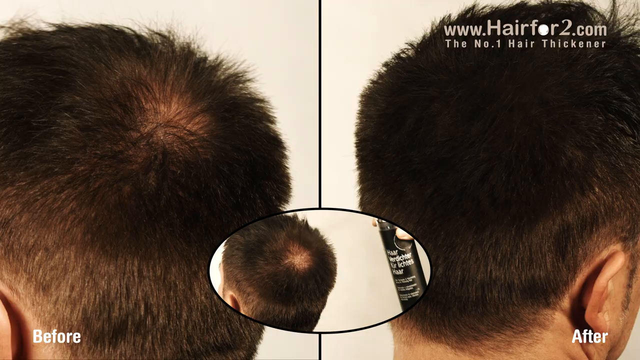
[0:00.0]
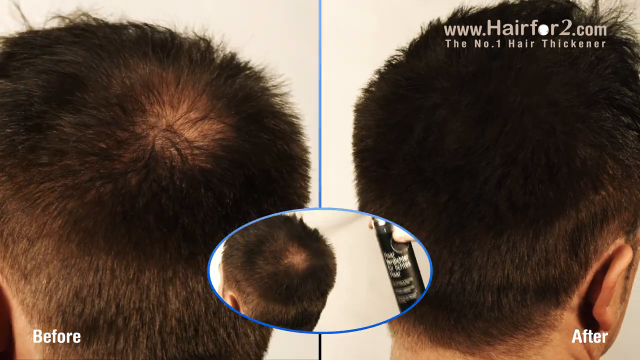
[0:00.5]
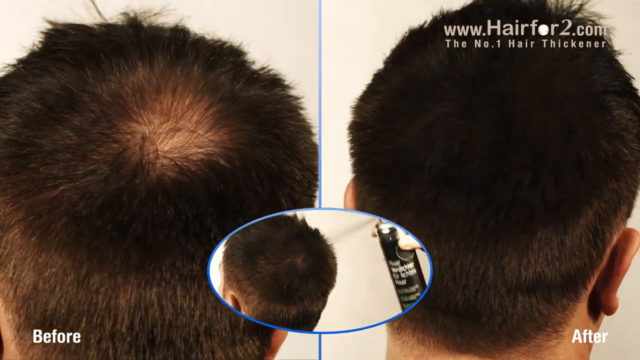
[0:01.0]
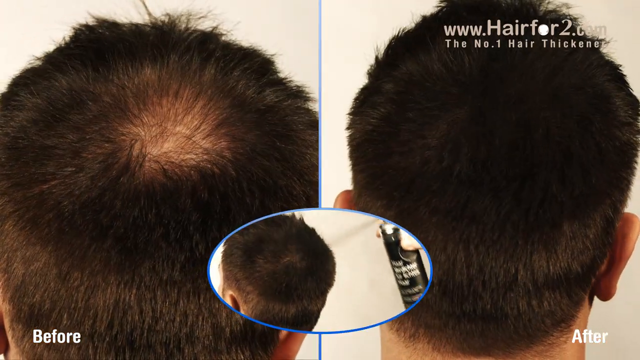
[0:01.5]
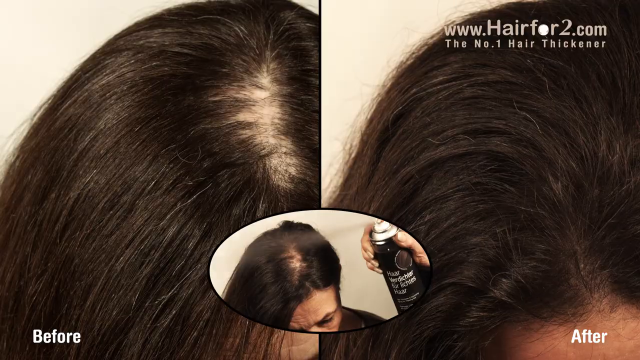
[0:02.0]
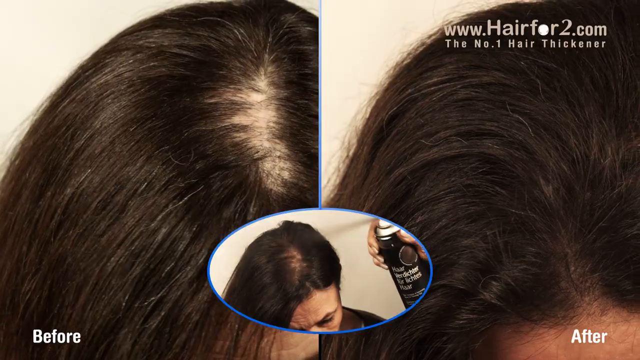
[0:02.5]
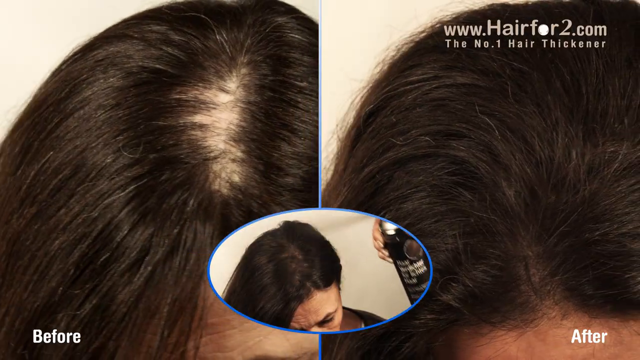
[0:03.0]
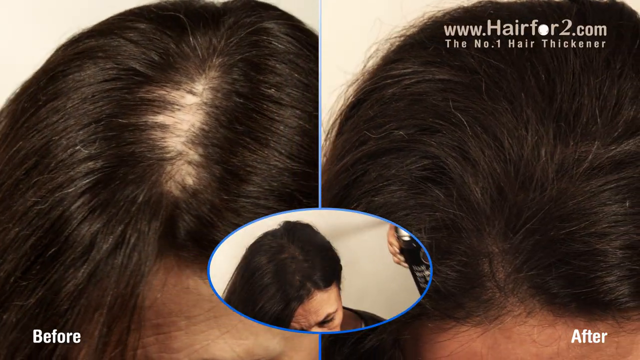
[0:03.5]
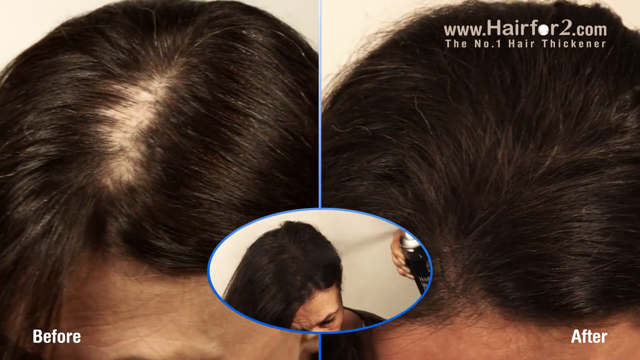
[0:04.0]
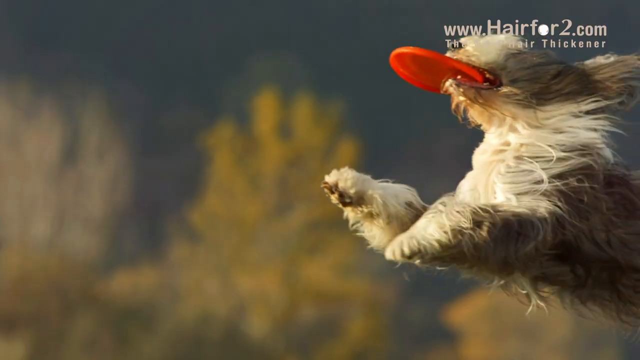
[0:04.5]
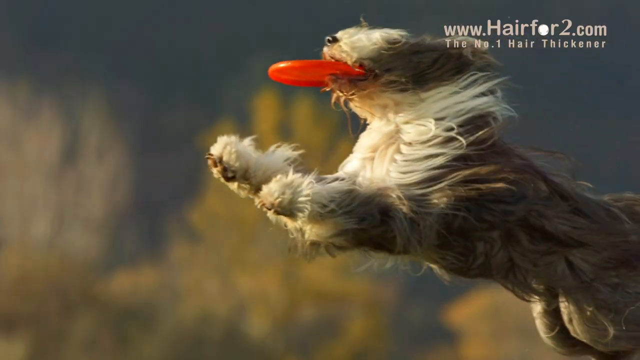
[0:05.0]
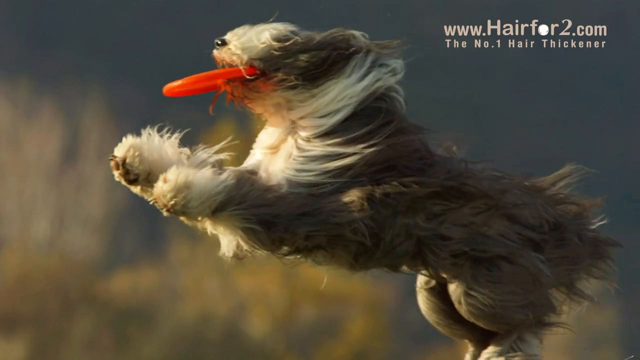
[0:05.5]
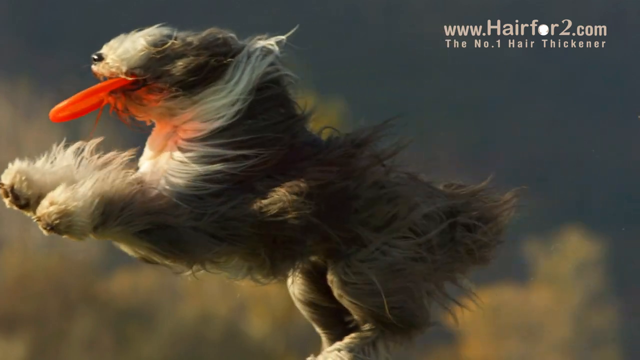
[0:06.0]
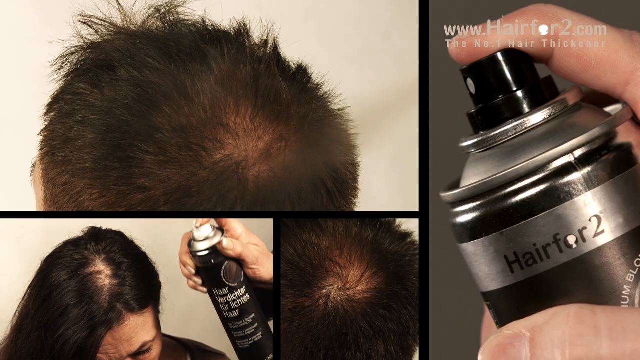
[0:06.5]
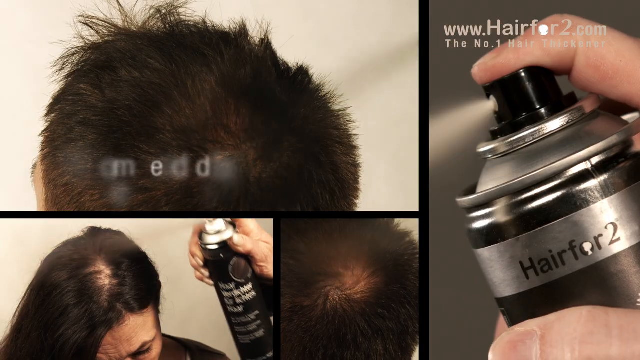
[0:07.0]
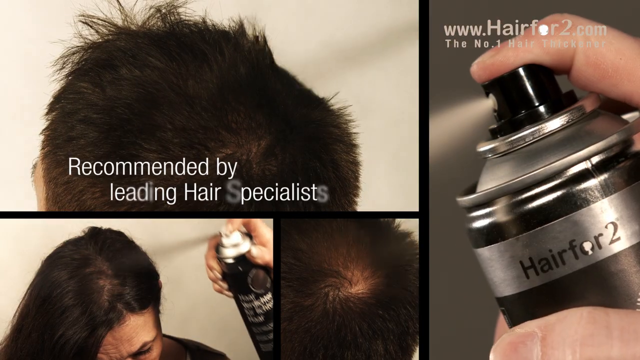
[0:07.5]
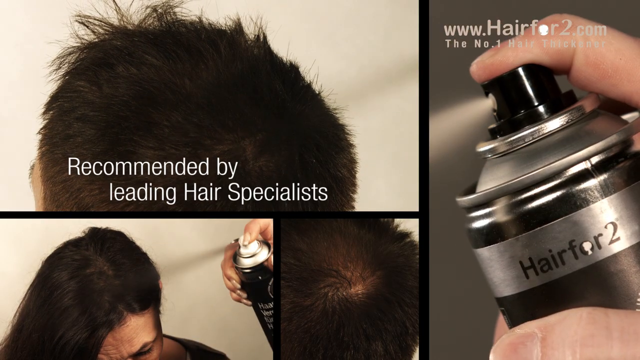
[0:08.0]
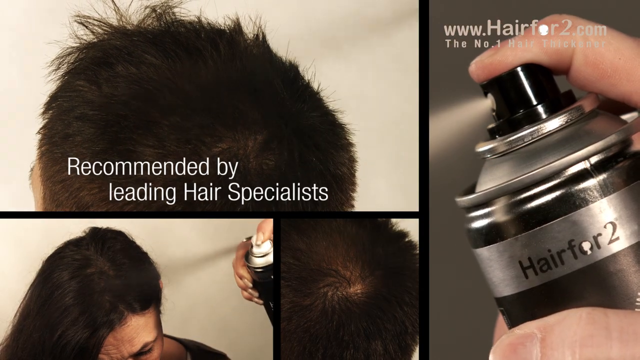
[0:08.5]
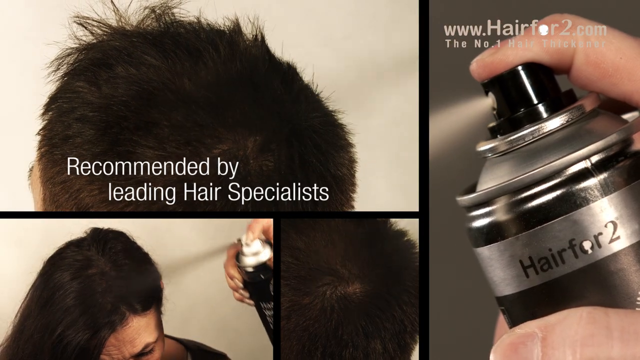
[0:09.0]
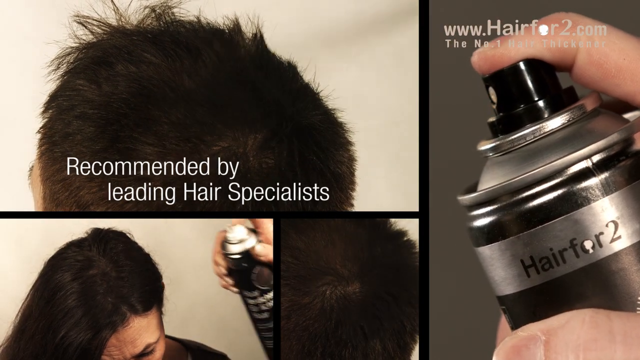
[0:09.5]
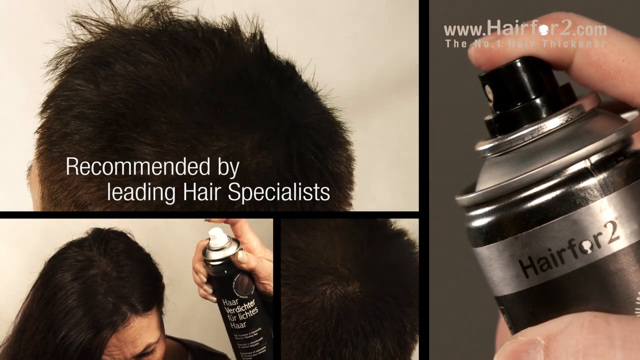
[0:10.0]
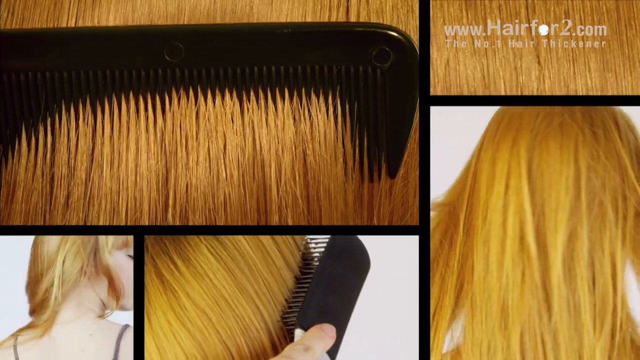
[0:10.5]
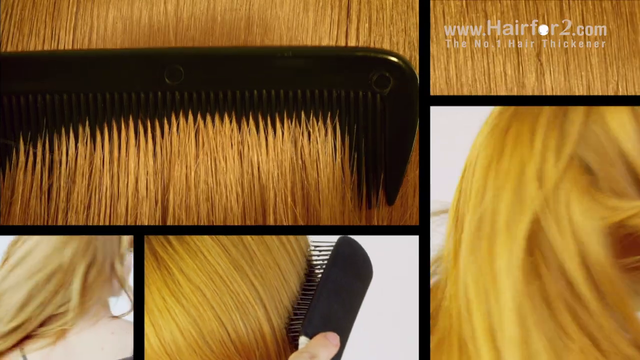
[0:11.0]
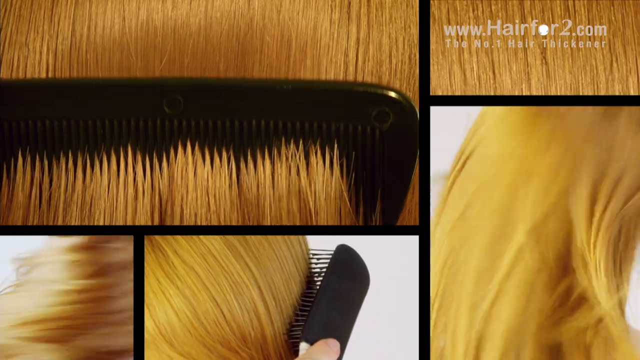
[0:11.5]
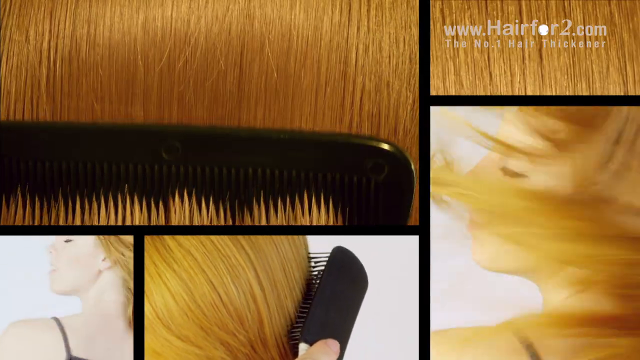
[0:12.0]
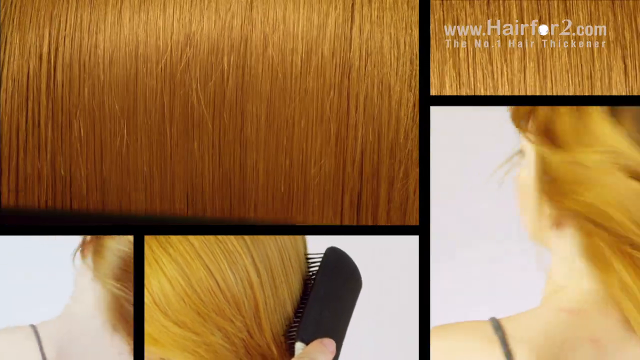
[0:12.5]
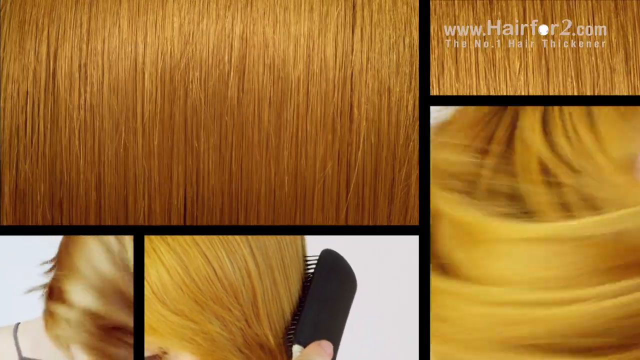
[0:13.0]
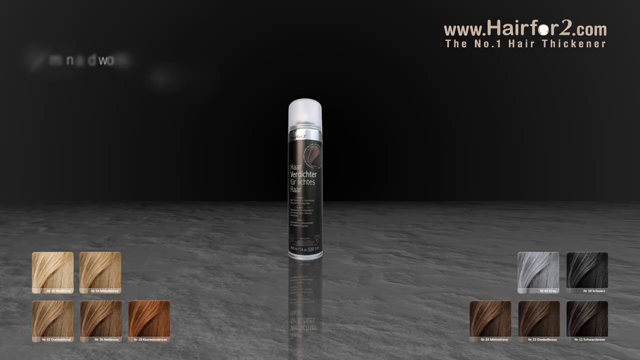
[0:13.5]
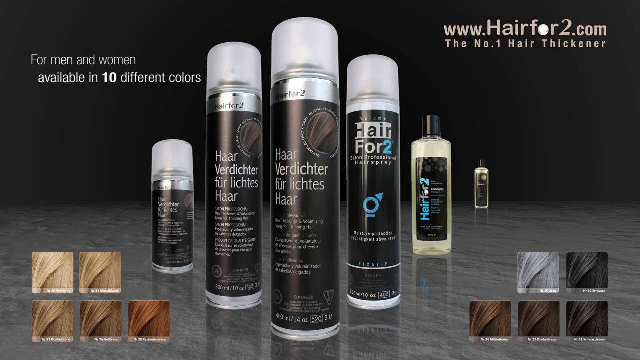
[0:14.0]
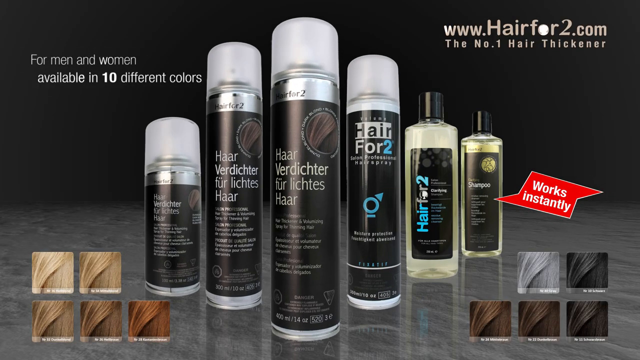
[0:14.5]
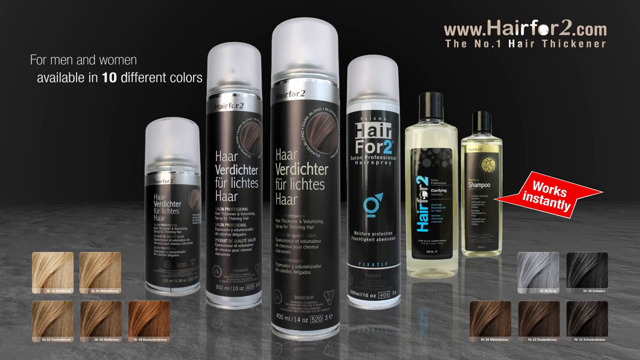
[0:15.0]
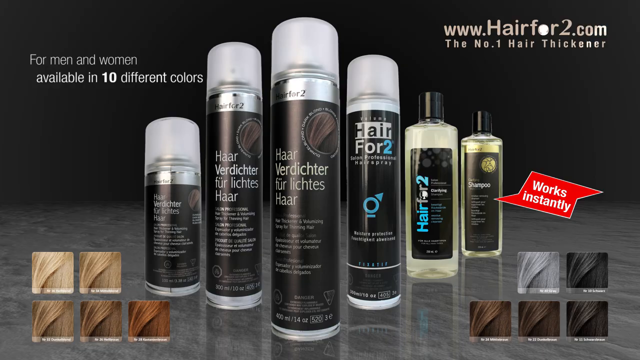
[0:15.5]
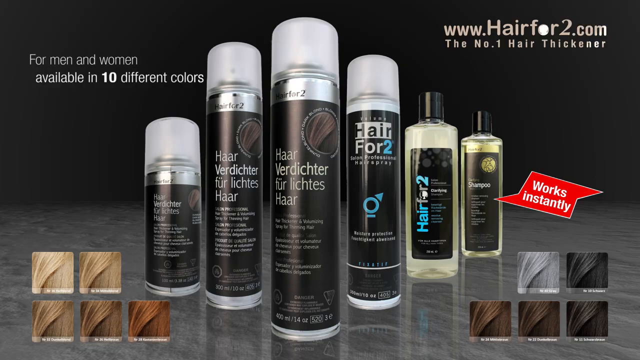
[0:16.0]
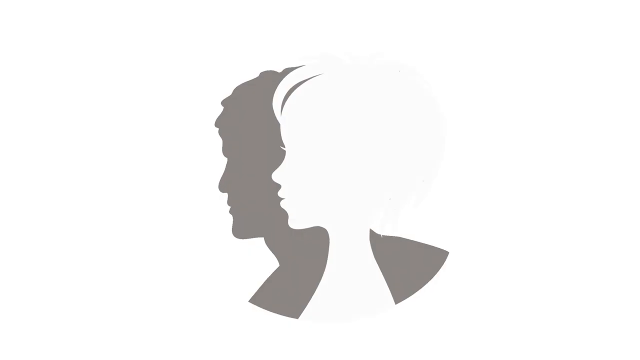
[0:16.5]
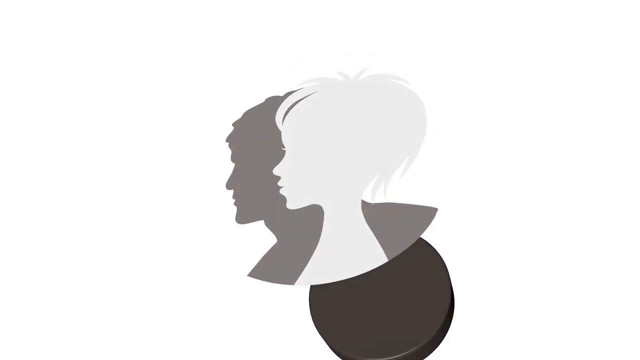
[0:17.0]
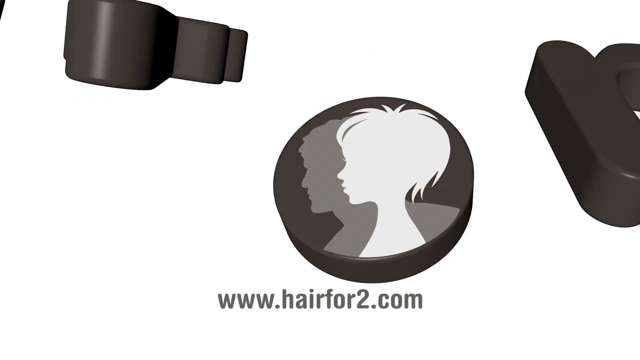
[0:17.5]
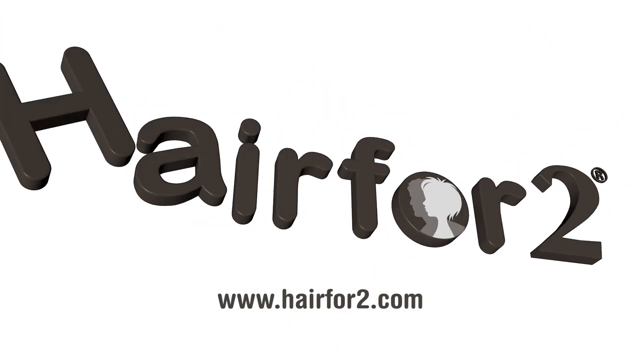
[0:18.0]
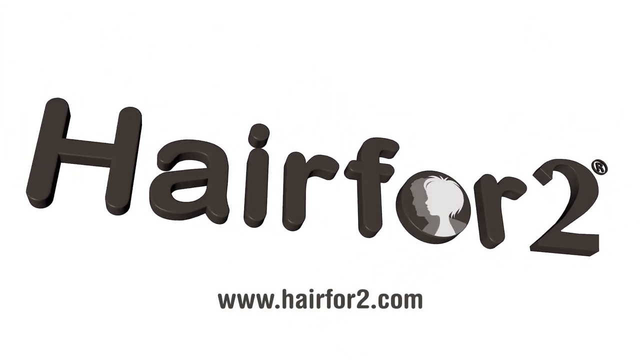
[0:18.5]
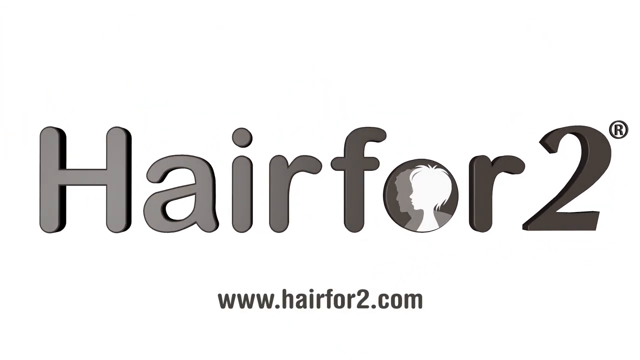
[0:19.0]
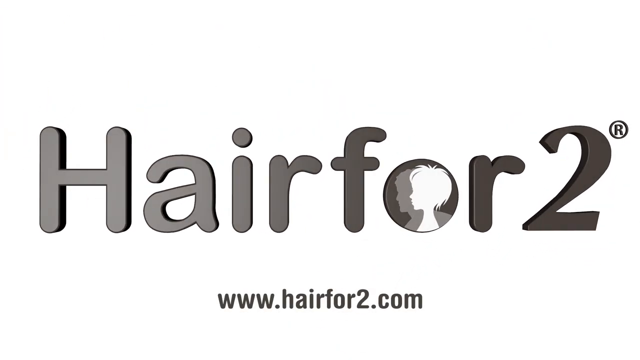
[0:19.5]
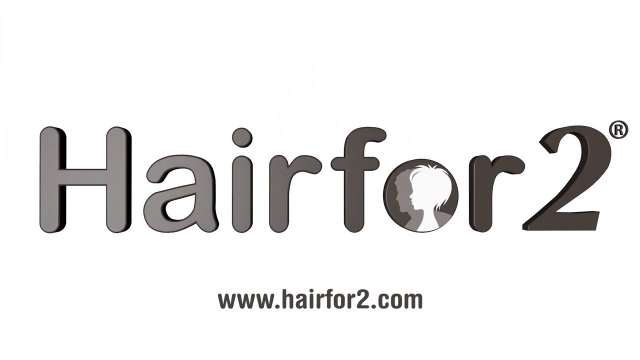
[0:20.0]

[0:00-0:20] An advert promotes what seems to be a solution for balding or thinning hair, used in Hollywood for the movies and for both men and women. A shot shows the back of a man's head and the top of his crown, which is balding and thinned. A spray is applied, almost like spraying hairspray but more like spray paint on the head; it colours the scalp the same colour as the hair and takes away the bald spots, so it looks like he has a full head of hair. Text says it is "recommended by the leading hairstylists" and that it is "not only for men." A woman with long brown hair appears; the parting in the middle of her head seems to be getting bigger and bigger, suggesting something like alopecia, with thinning hair on top. When the coloured spray is used, it looks like she has a full head of hair. Next comes a picture of a dog with very long hair jumping in the air and catching a frisbee in its mouth, probably suggesting that the product can give hair as thick and long as the dog's. The product also seems to thicken hair, as pictures show a woman with long blonde hair and a comb being run through it. Another picture shows all the products laid out and presented on a table, apparently in different colours and strengths and for different hair types. At the end, text says it is "brought to you by HairForTwo.com" and that it is "the number one hair thickener."